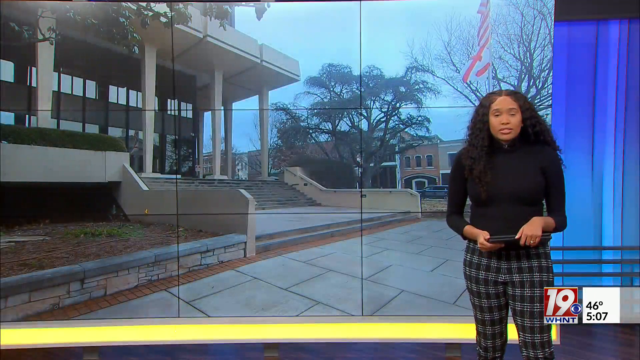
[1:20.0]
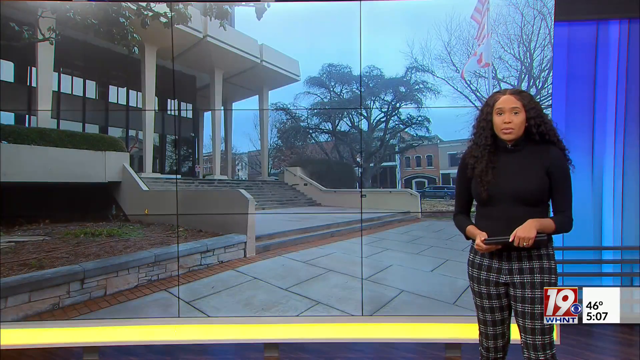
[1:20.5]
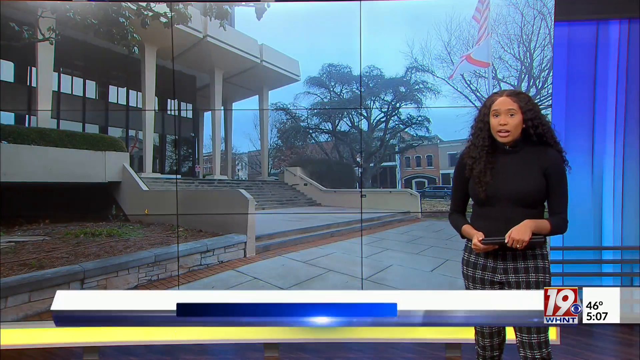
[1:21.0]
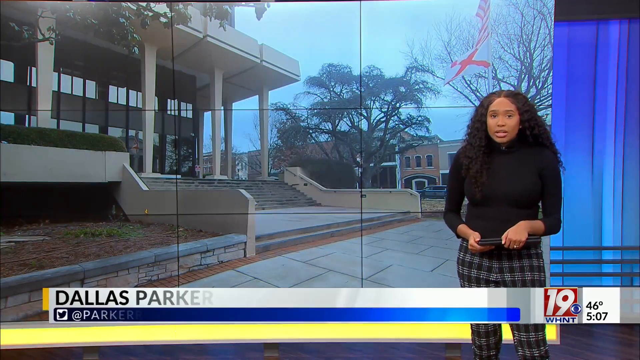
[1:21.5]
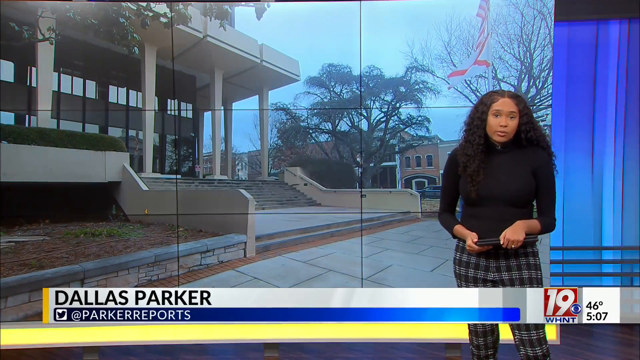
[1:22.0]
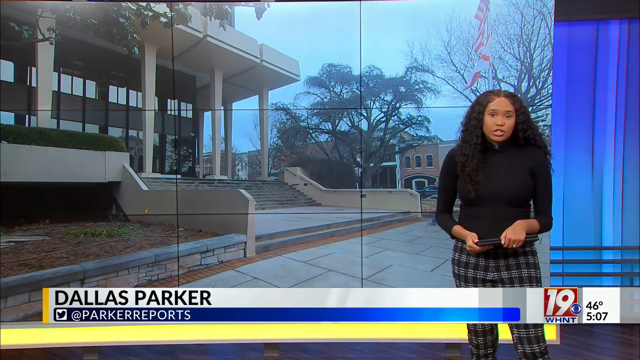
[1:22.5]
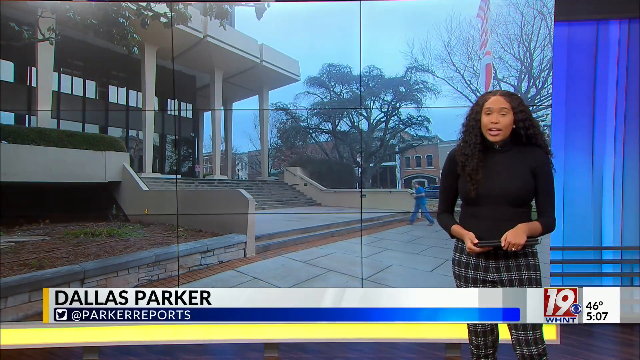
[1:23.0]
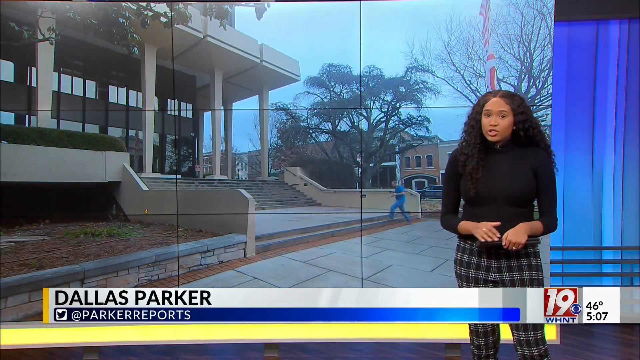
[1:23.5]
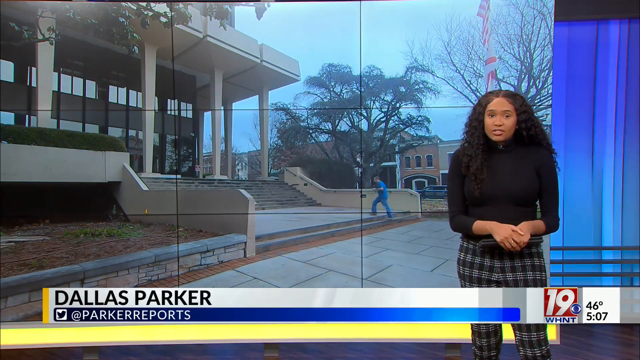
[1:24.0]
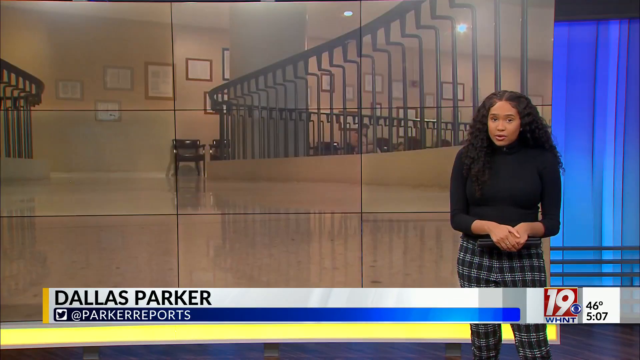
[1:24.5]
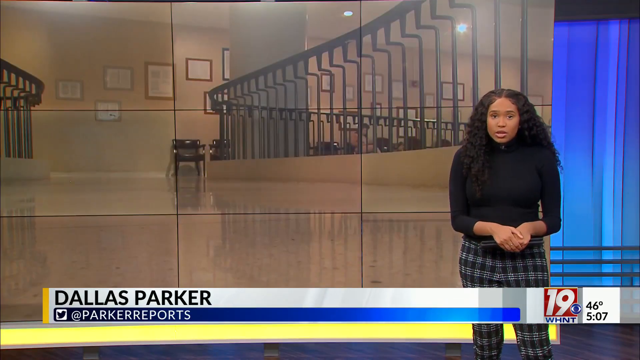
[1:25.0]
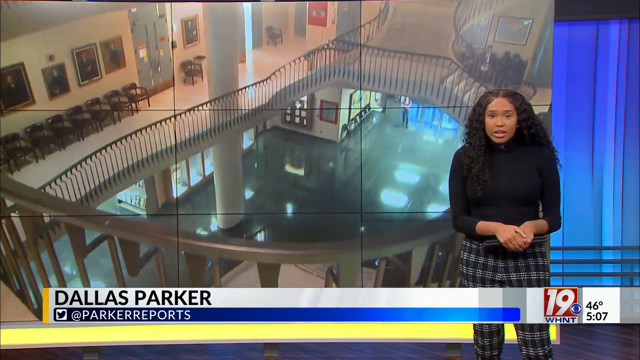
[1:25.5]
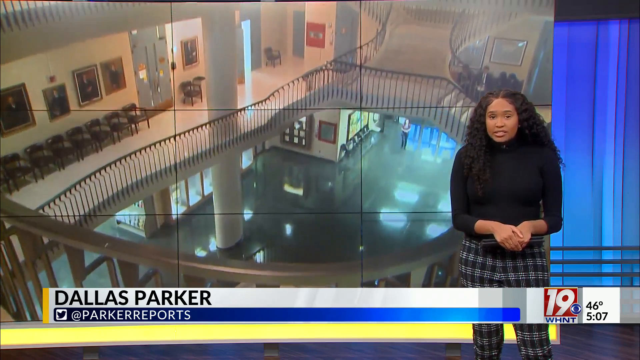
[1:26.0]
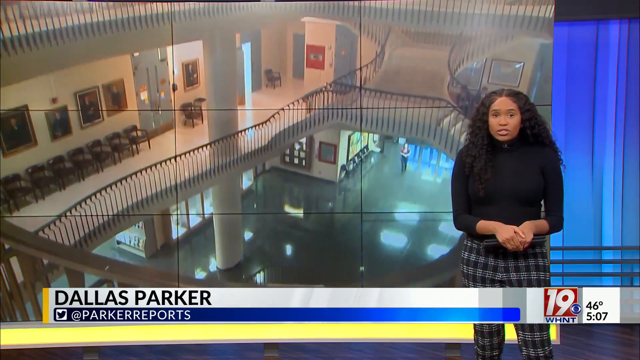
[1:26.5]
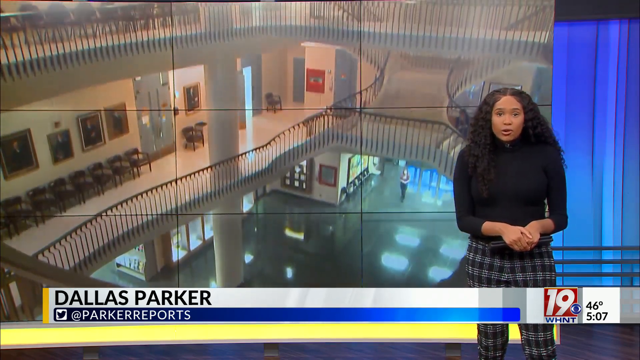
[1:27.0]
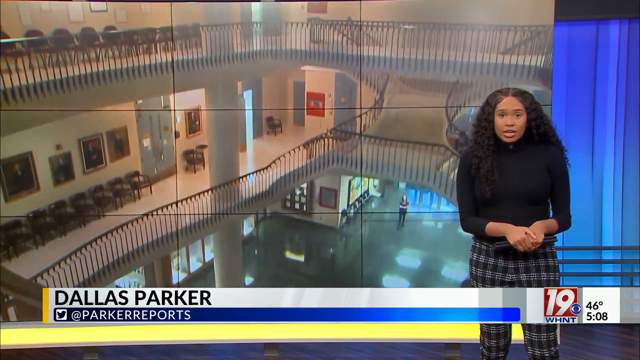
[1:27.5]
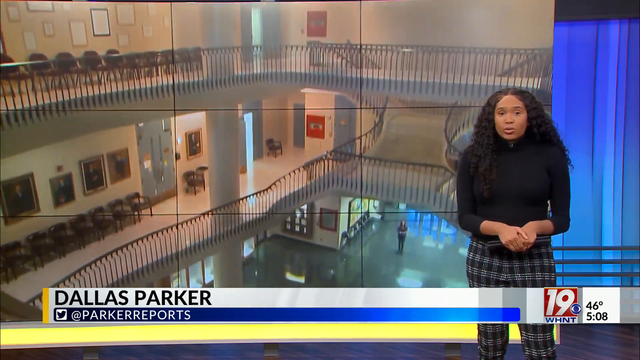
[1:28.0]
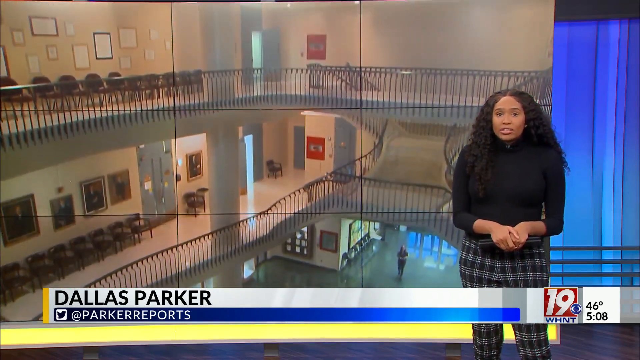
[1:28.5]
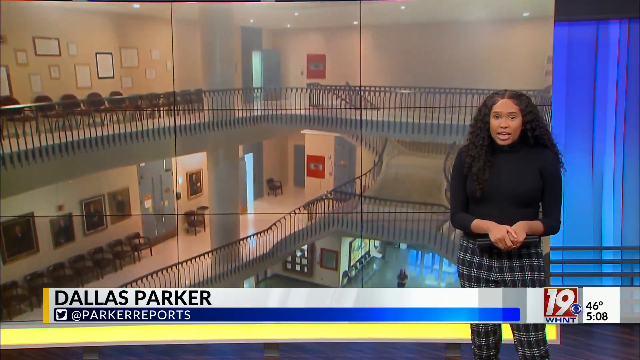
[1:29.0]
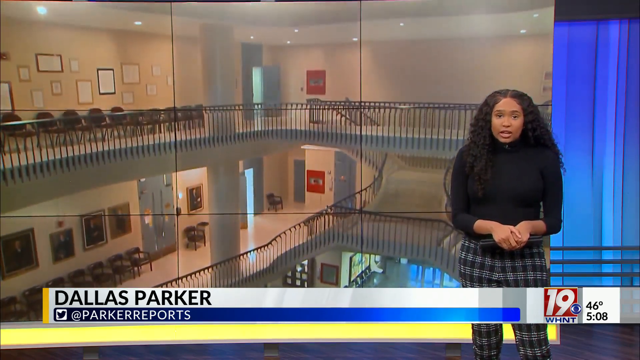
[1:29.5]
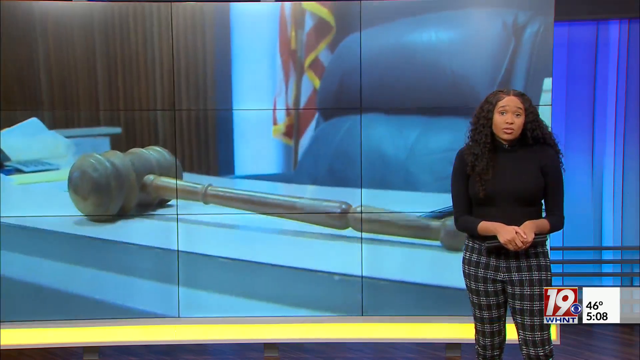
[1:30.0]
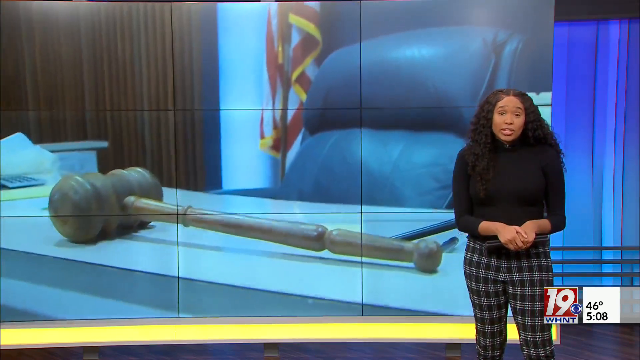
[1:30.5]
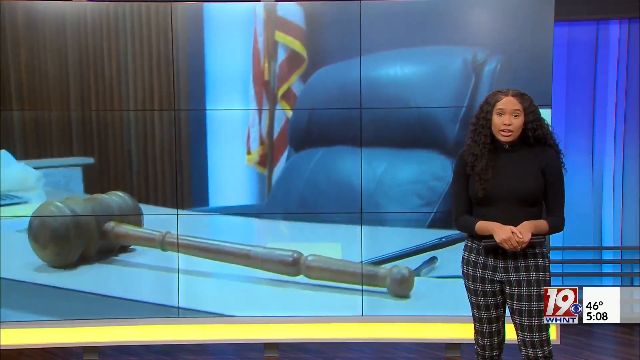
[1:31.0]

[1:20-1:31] The broadcast returns from the news footage to the inside of the newsroom, where Dallas Parker continues talking about the story. Scenes from outside the courthouse follow, including a man walking into the courthouse. Then the inside of the courthouse is shown, revealing how large it is; it is fairly empty inside.